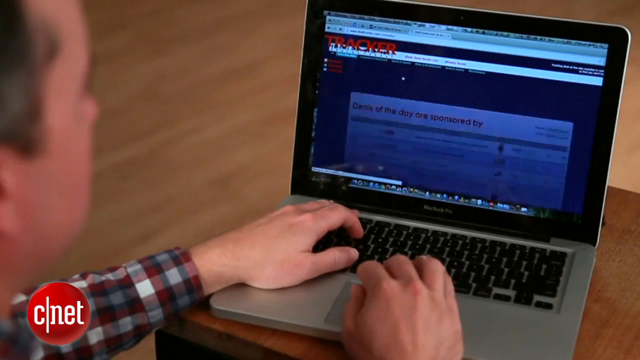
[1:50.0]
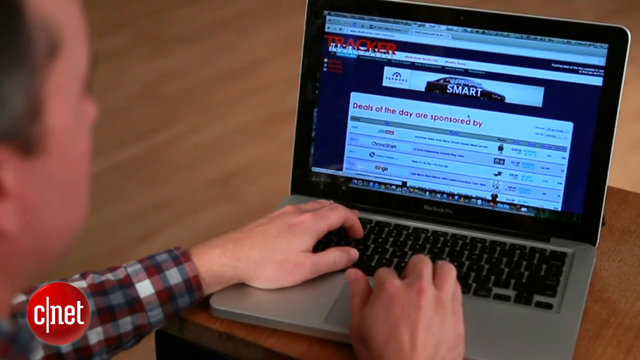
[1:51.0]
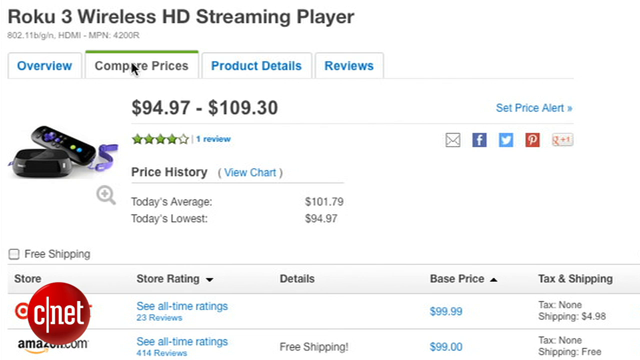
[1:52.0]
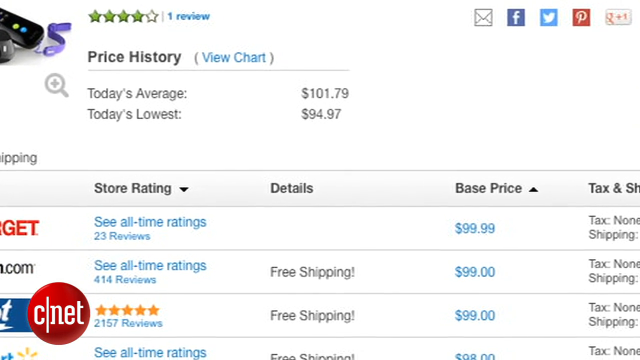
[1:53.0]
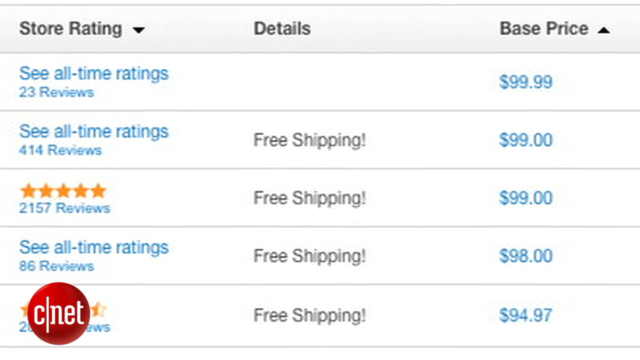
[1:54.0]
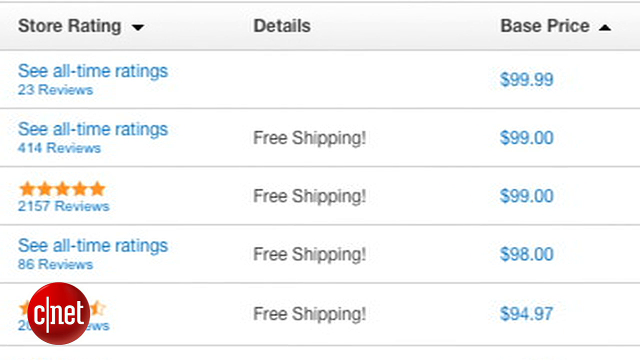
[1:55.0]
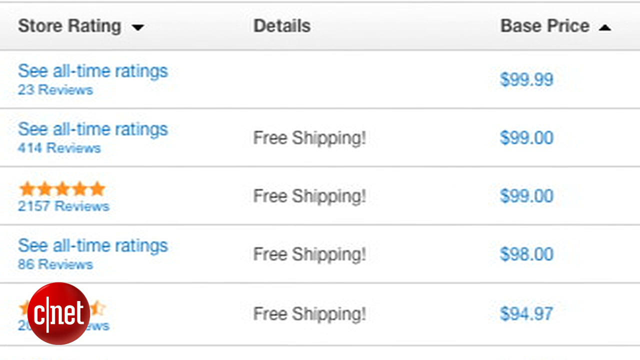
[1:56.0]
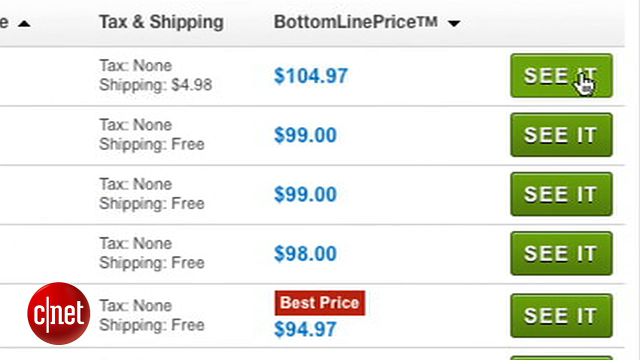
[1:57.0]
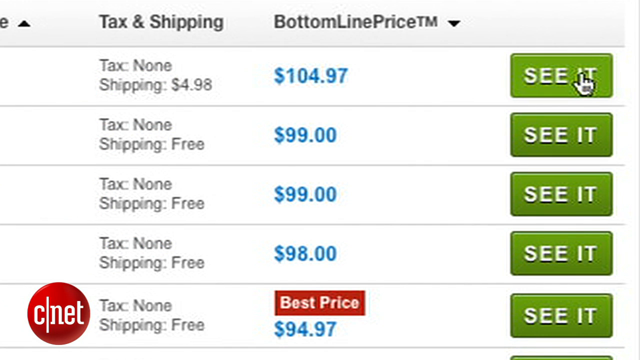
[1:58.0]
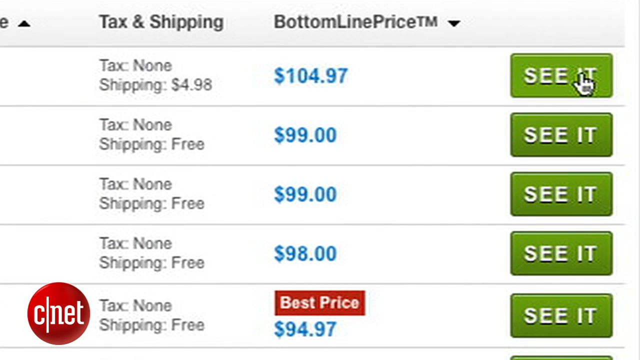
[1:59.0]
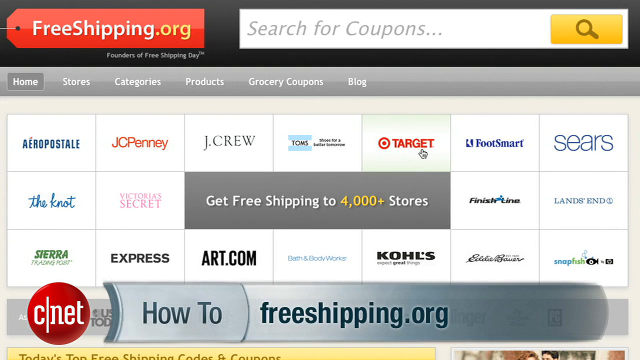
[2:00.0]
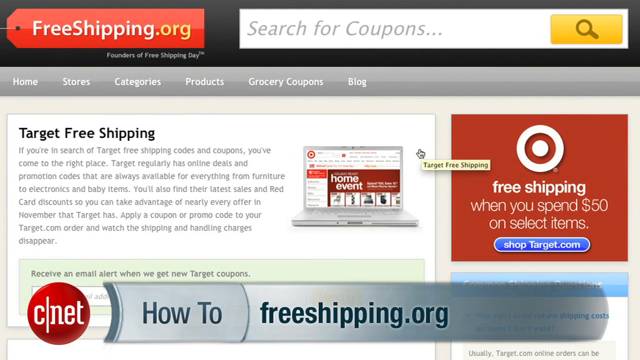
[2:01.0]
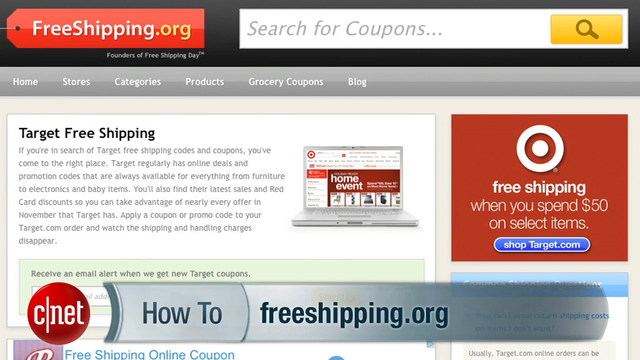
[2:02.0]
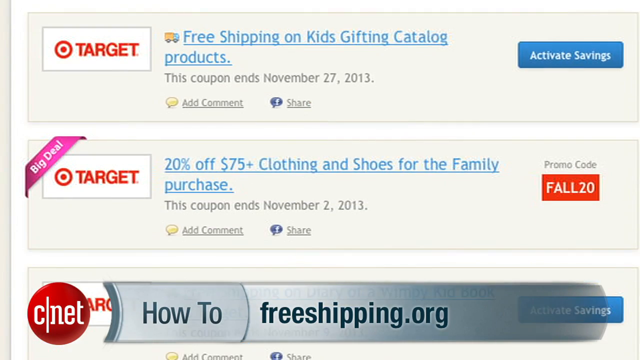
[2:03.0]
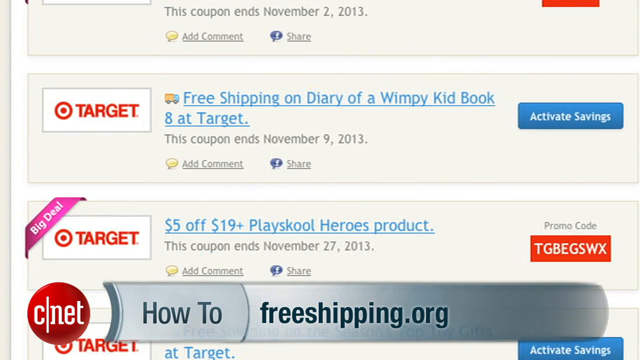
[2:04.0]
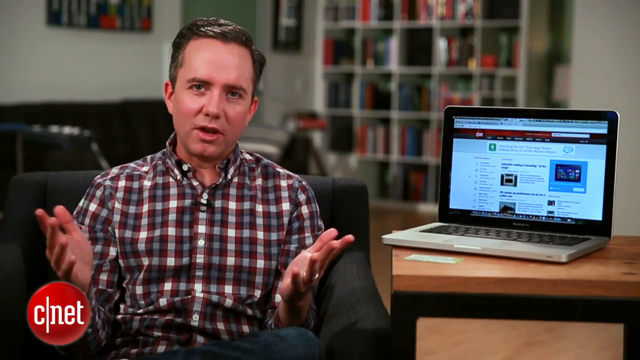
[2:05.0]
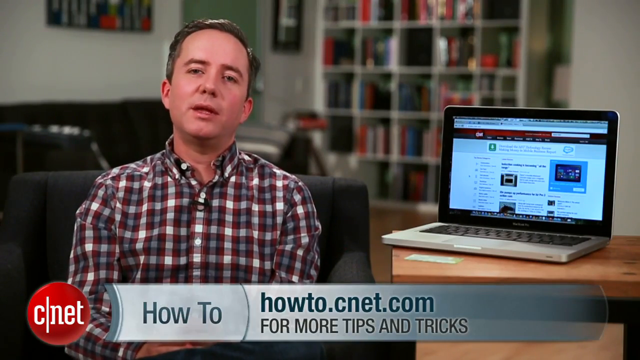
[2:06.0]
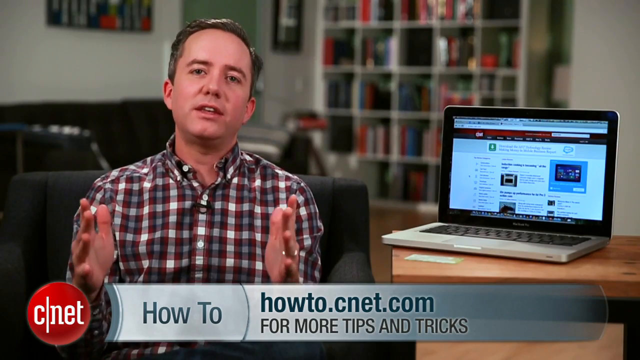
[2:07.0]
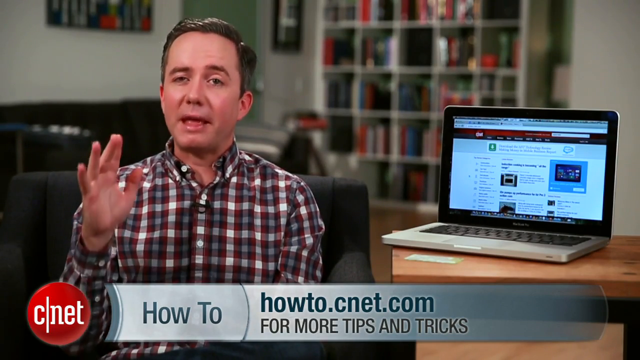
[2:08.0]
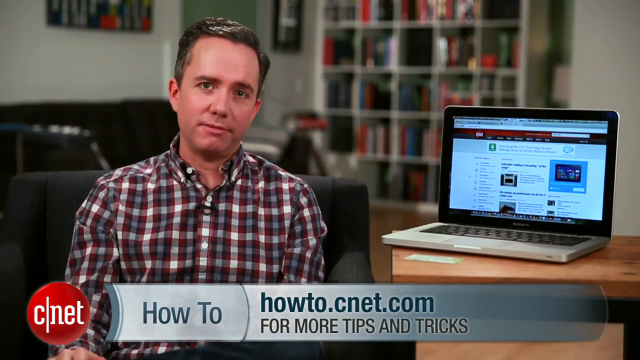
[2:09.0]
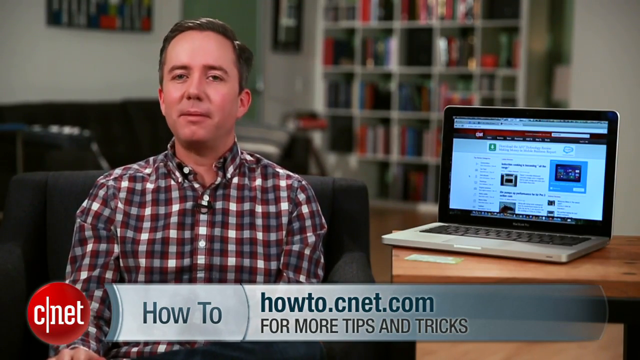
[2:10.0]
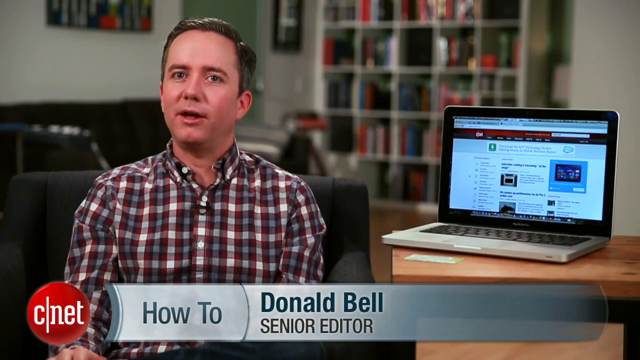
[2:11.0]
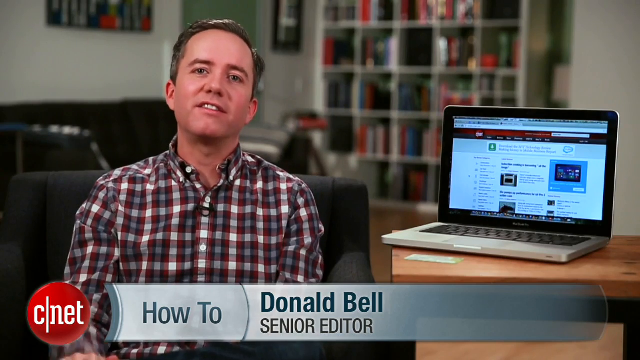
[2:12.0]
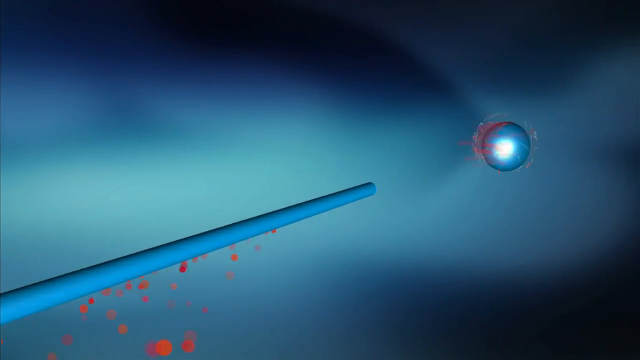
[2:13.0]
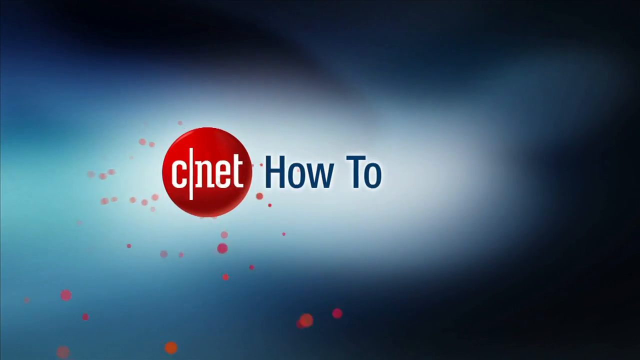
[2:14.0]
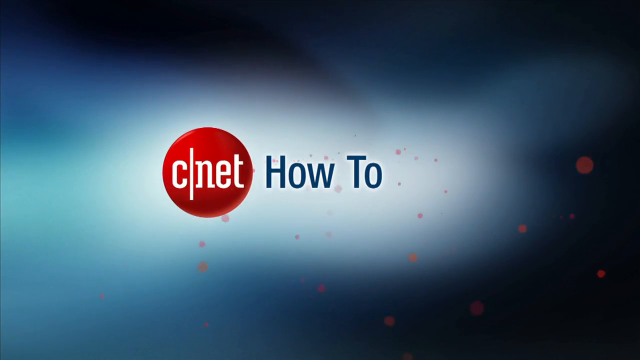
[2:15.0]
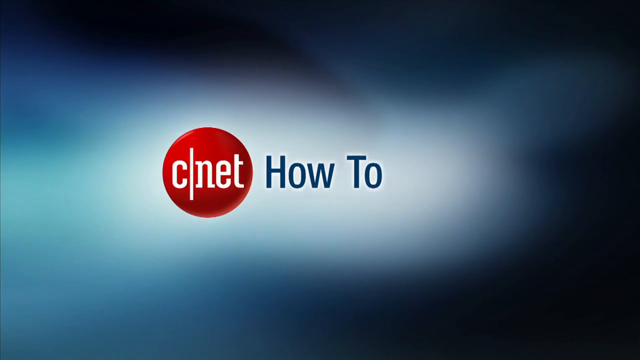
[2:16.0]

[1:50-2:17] The editor is shown back on the computer, then a screen grab reads "free shipping" and a green button is clicked, leading to freeshipping.org, where Target logos appear. A chyron reads "howto.cnet.com for more tips and tricks," followed by "How to, Donald Bell, senior editor." An animation very similar to the opening animation closes the video, with information showing it is from CNET's how to series with Donald Bell, senior editor.